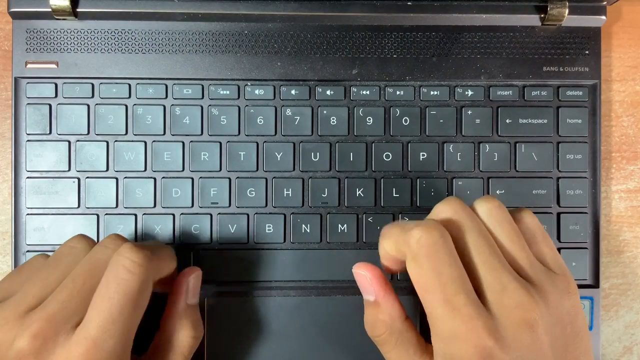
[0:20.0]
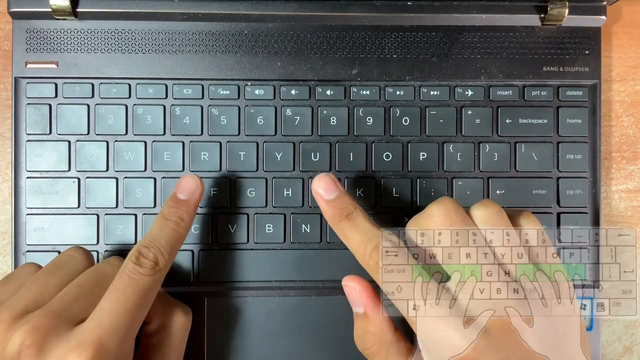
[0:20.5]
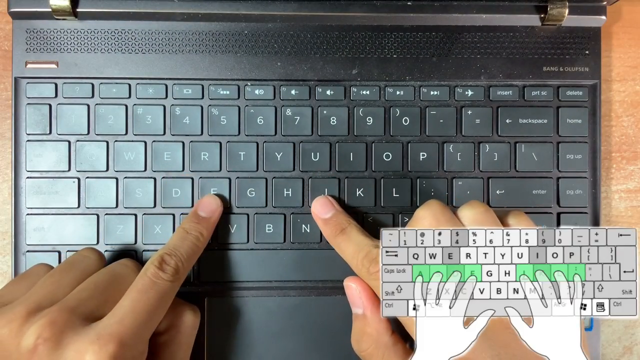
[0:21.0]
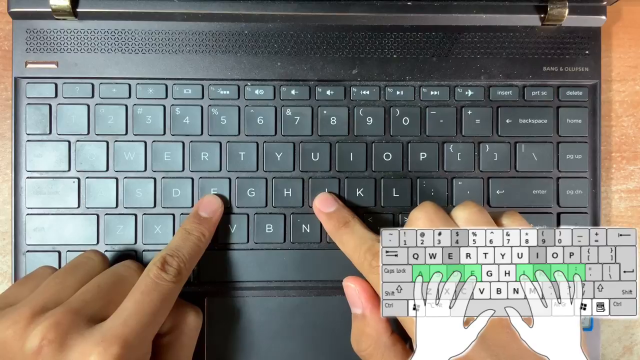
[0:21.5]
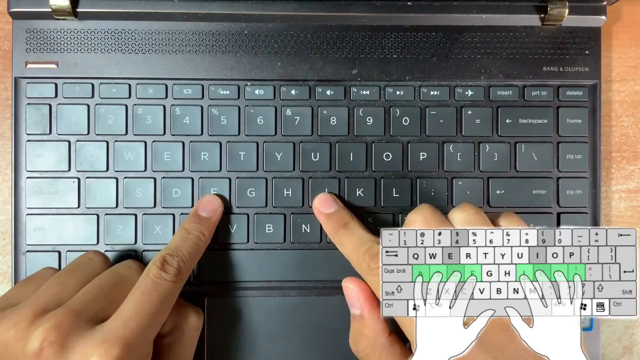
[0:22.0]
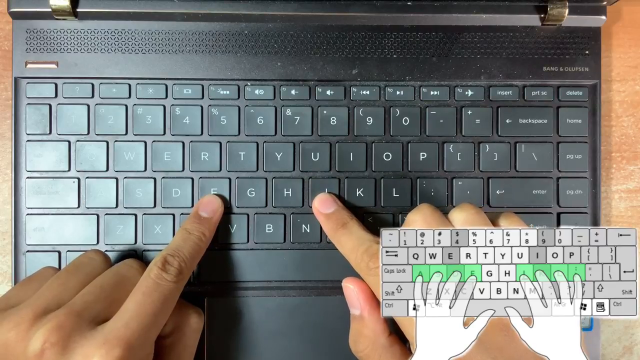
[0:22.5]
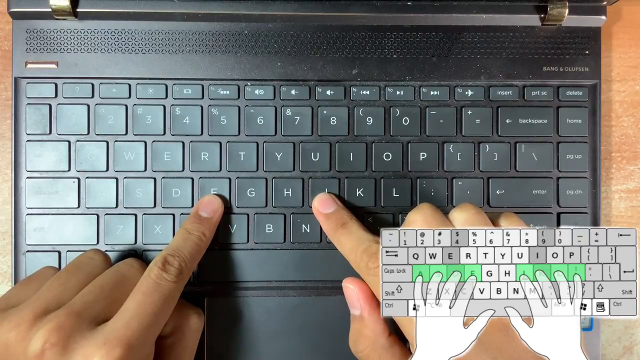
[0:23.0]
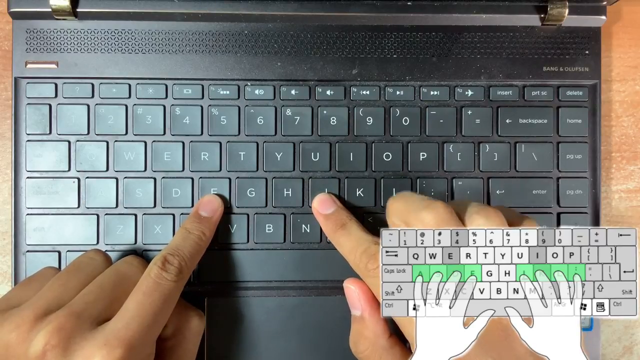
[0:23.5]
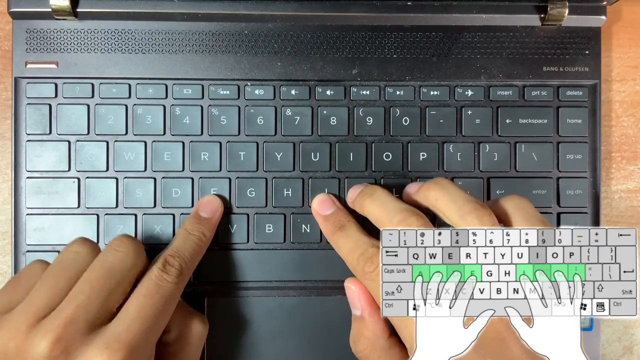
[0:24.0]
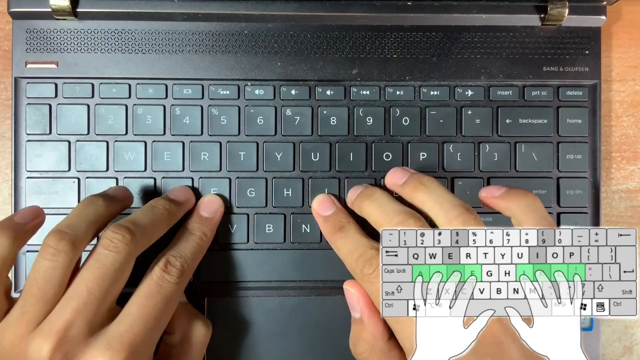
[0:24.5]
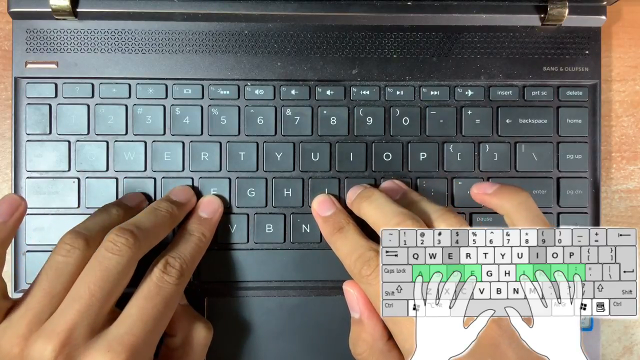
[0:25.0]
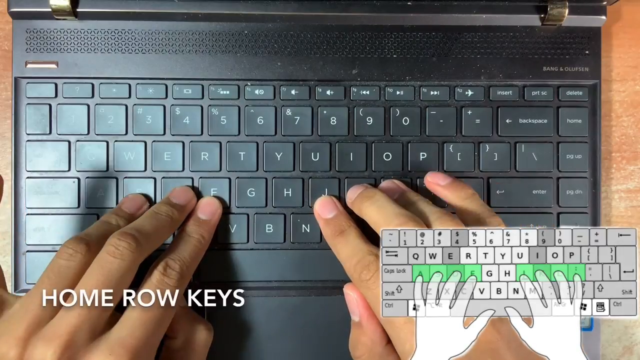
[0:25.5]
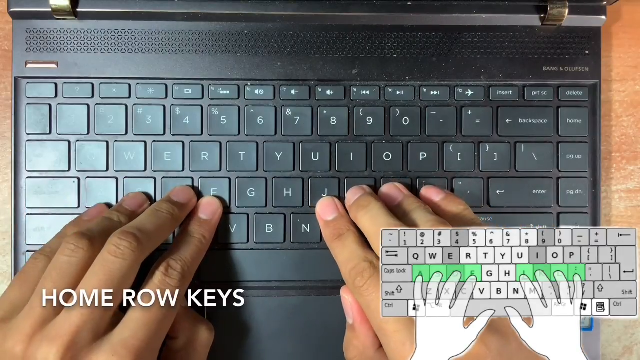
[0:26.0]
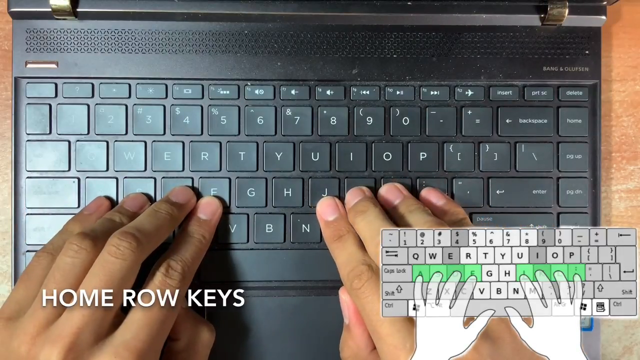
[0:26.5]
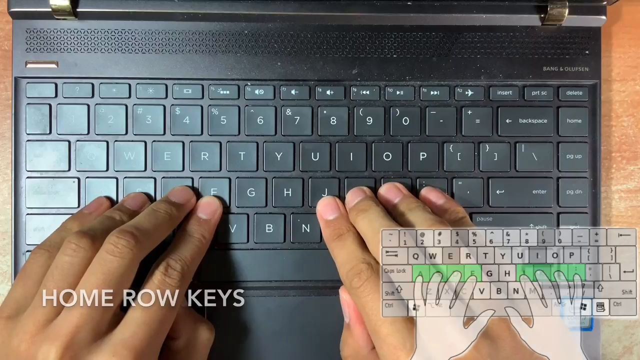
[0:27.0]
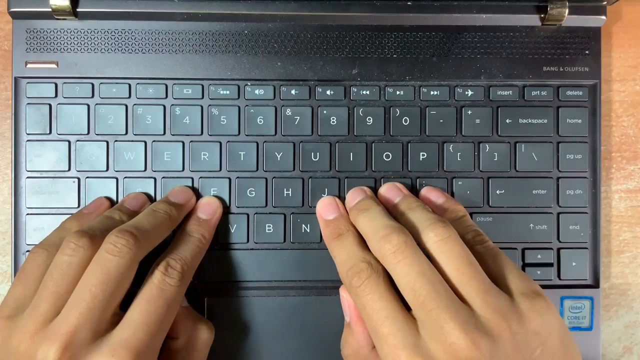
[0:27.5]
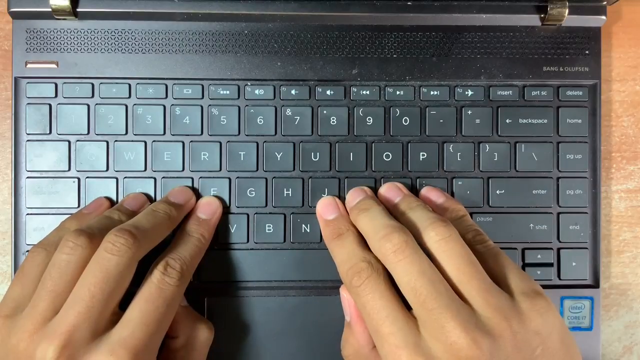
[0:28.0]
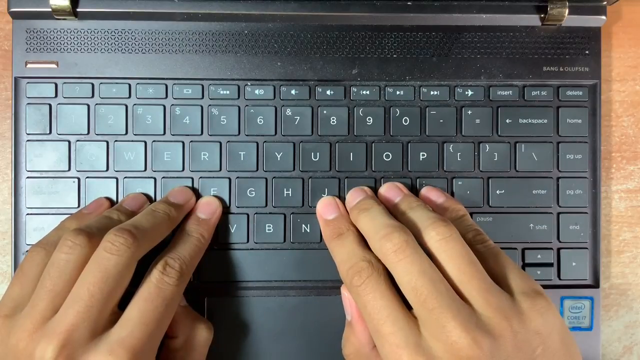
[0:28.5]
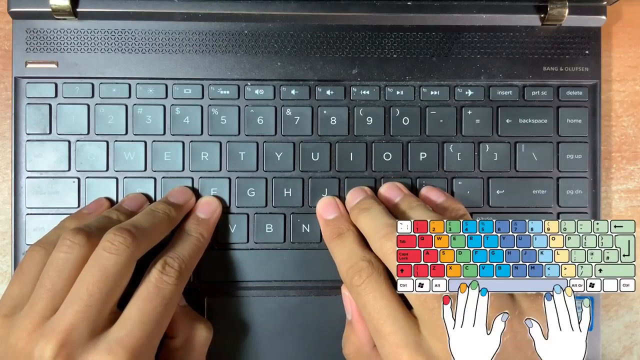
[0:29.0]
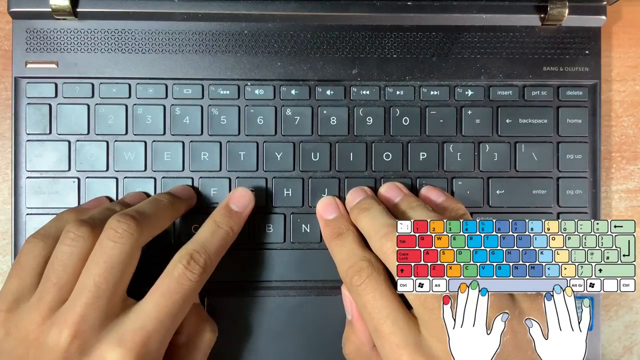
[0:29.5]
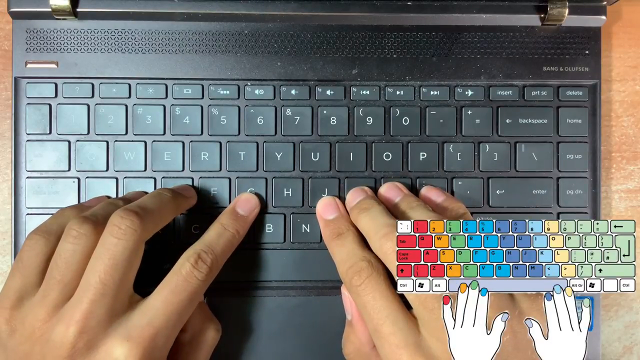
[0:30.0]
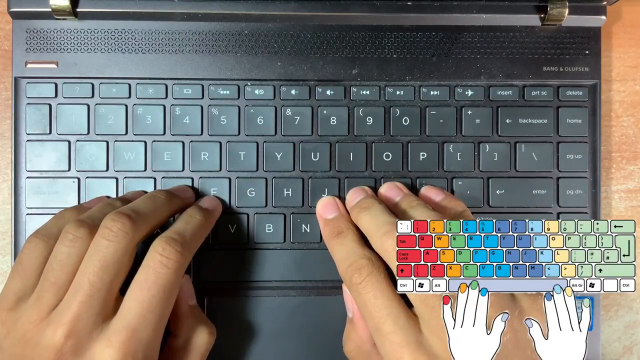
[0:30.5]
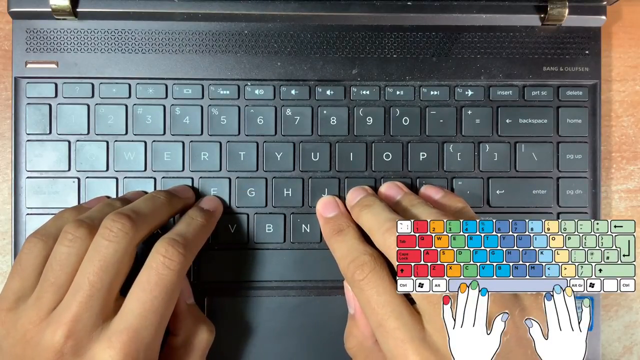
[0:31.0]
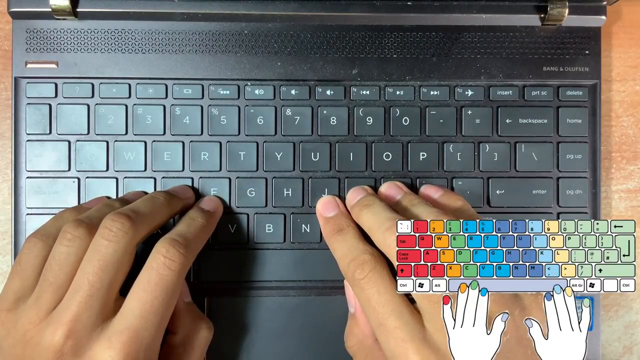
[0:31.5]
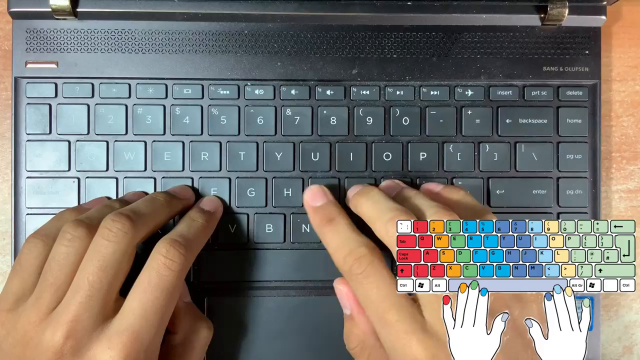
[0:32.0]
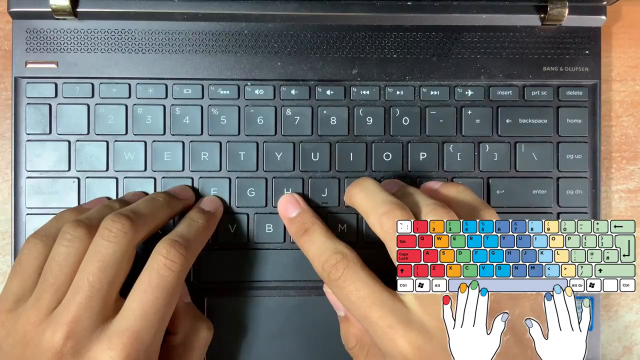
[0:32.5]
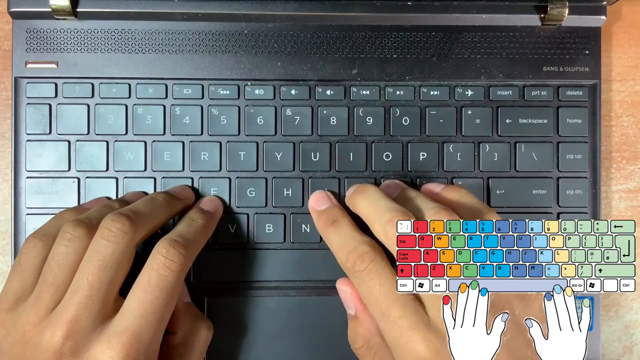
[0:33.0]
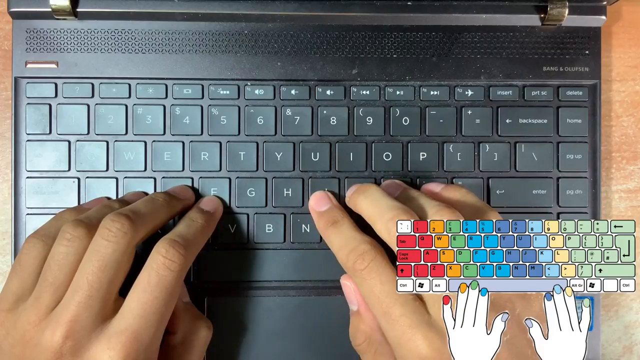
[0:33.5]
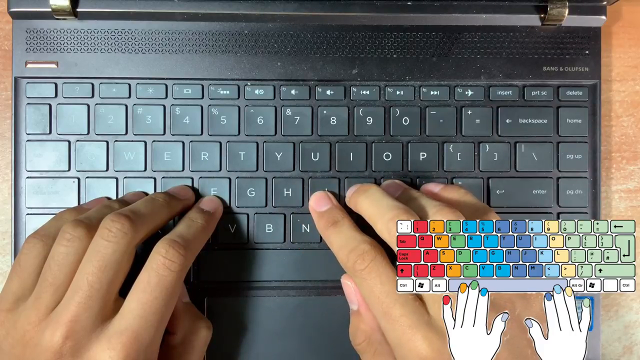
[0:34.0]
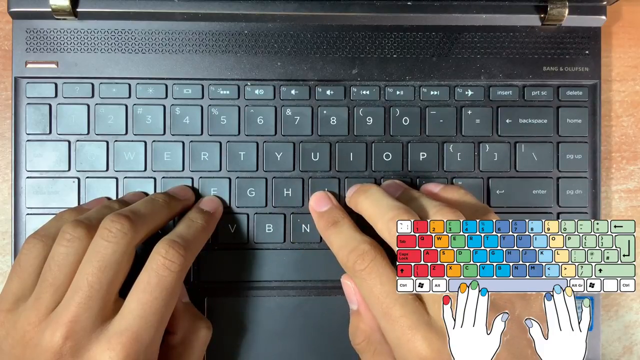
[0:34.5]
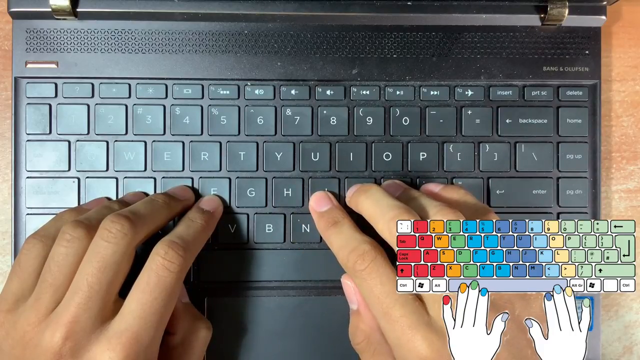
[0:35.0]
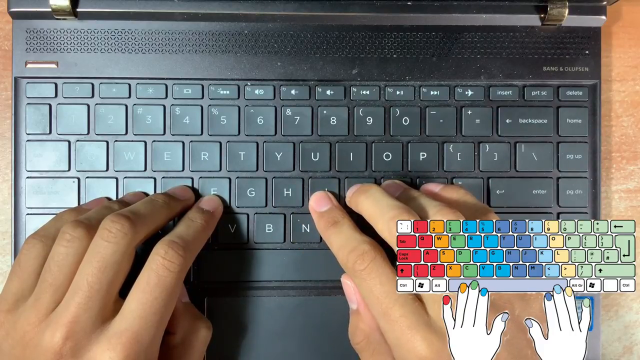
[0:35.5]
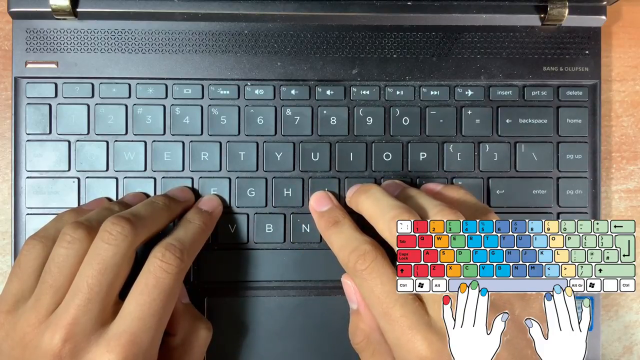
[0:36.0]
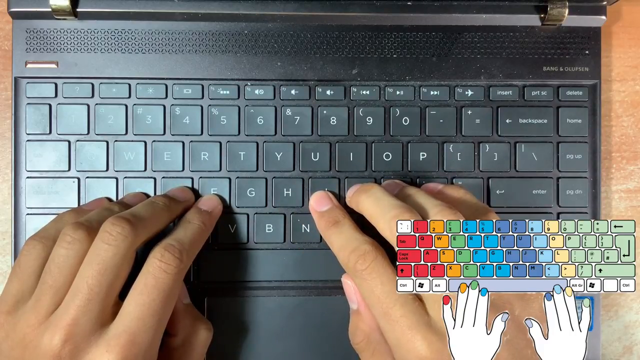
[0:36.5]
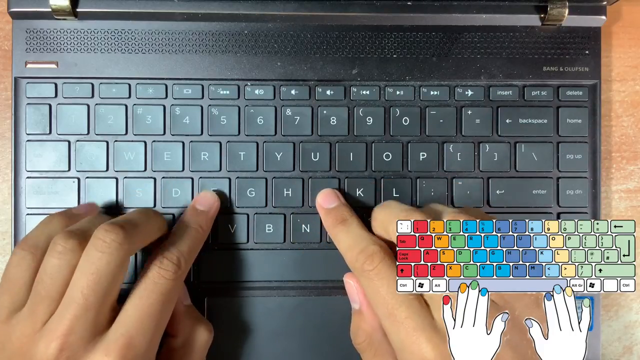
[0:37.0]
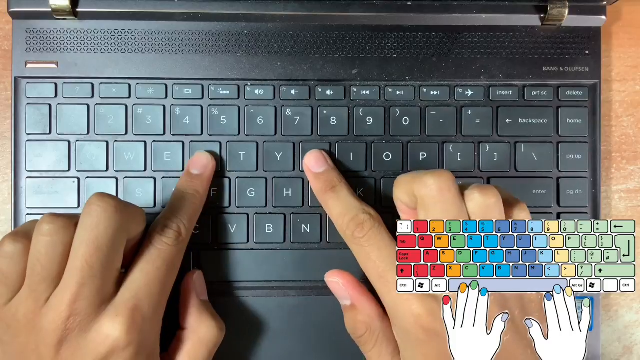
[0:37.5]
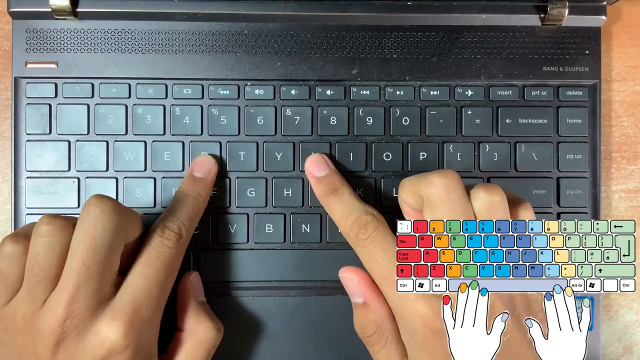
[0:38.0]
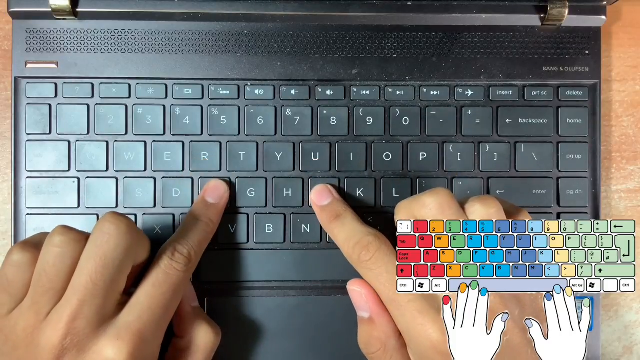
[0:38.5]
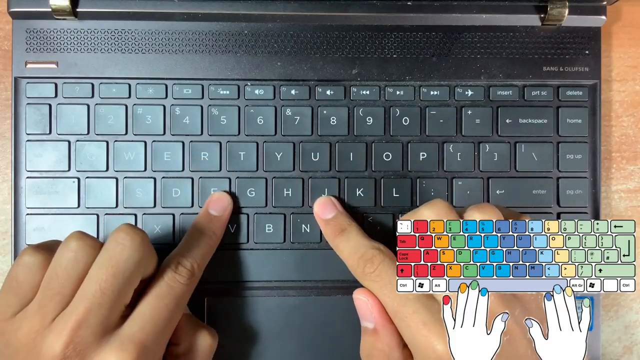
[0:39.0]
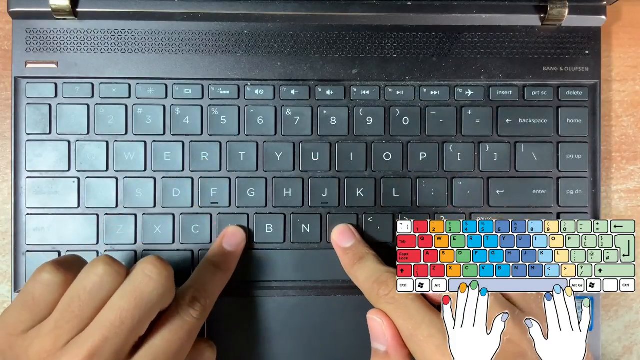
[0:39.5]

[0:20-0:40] From the overhead view, the man points his two pointer fingers out from his knuckles above the keyboard. The rest of his fingers follow in a row, placed on the keys A, S, D, F for his left hand and J, K, L, colon for his right hand. He leaves his hands on these keys while a graphic on the right shows the keys his fingers are on, highlighted green. Text at the bottom left disappears, and at the bottom right of the screen appears the same rainbow keyboard image from the website, with his hands above the space bar on that graphic. His hands stay above the keyboard in the same position until he puts his fingers back to his knuckles except for his pointer fingers, which he points at R and U, then F and J, then V and M in a consecutive motion down the keyboard.